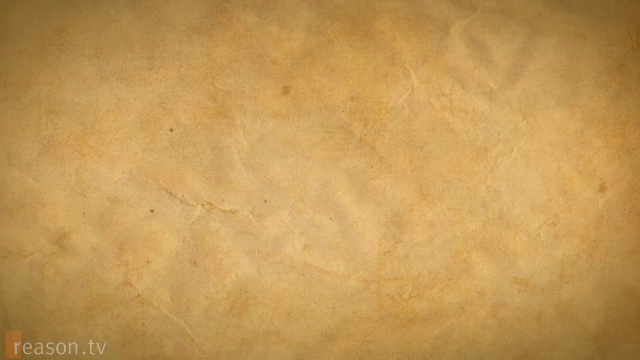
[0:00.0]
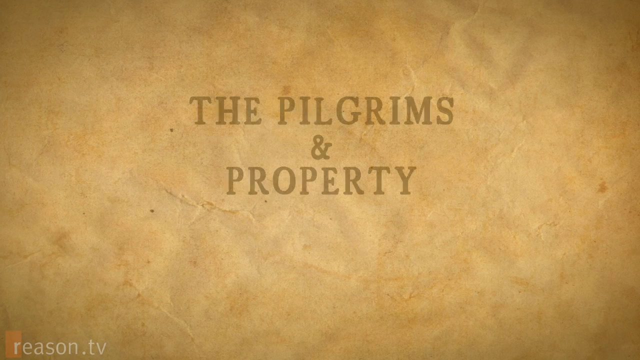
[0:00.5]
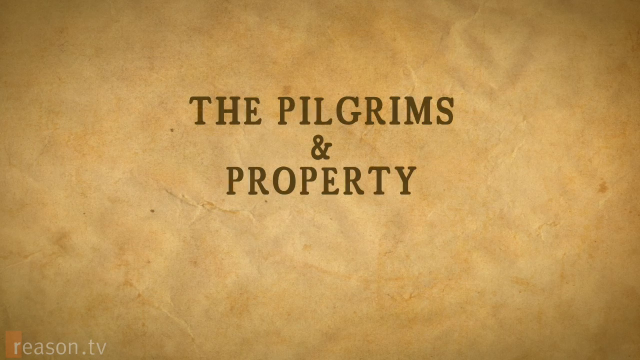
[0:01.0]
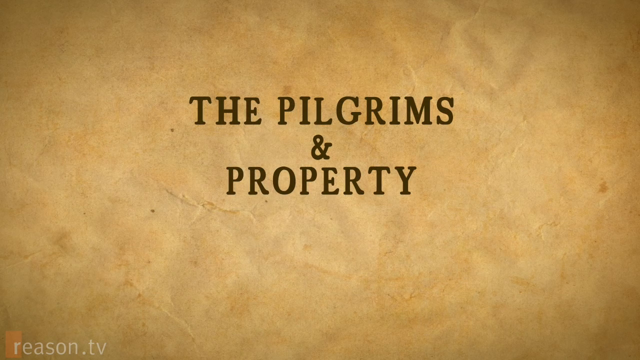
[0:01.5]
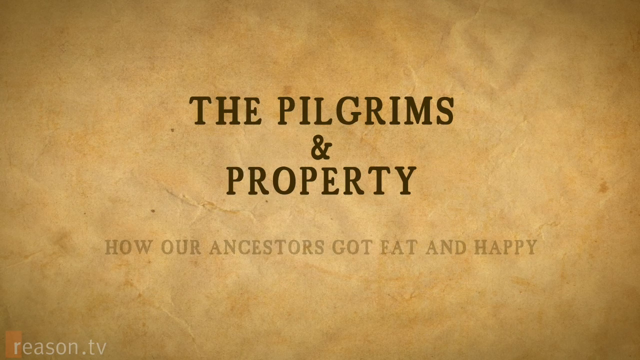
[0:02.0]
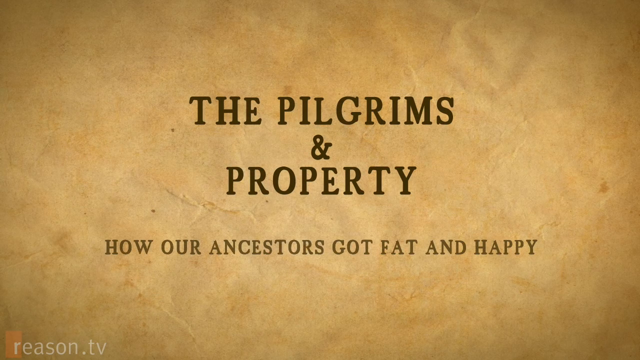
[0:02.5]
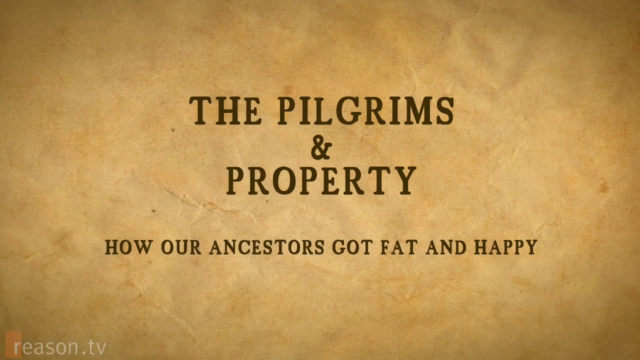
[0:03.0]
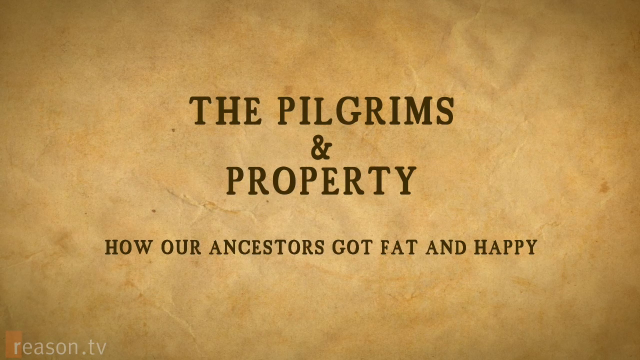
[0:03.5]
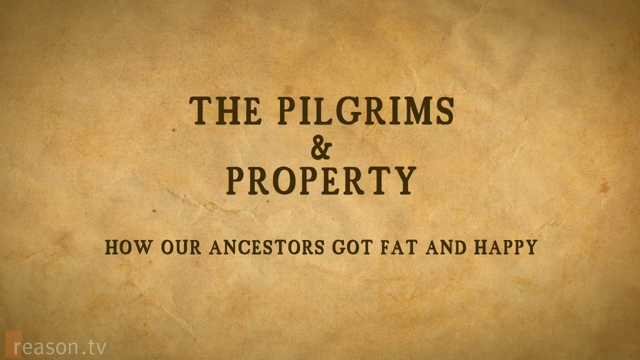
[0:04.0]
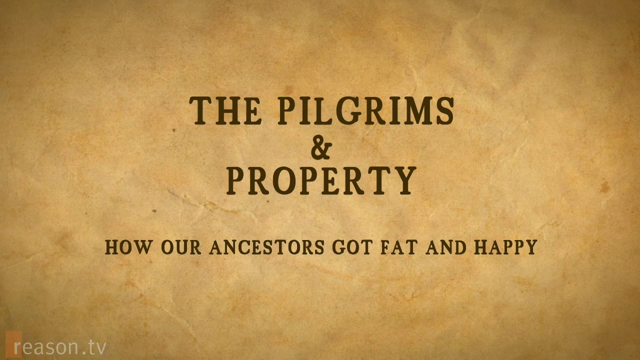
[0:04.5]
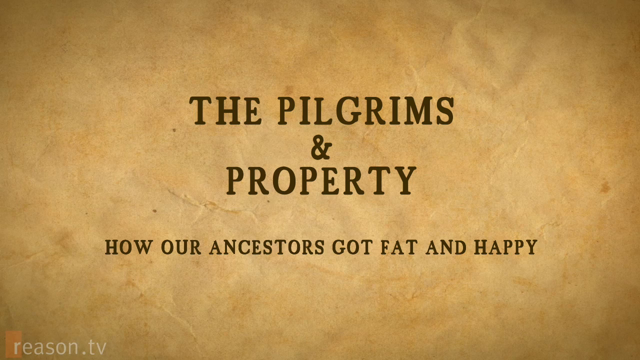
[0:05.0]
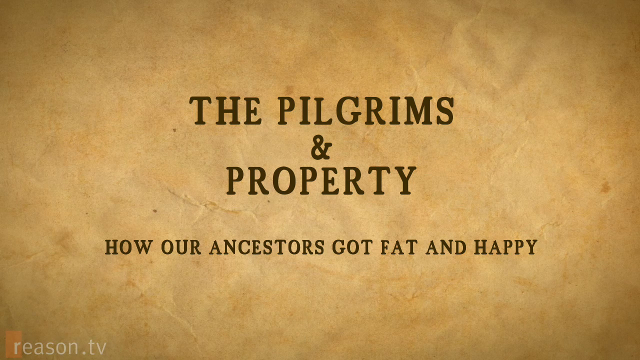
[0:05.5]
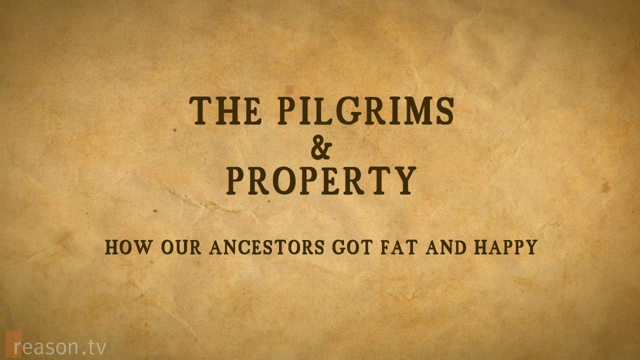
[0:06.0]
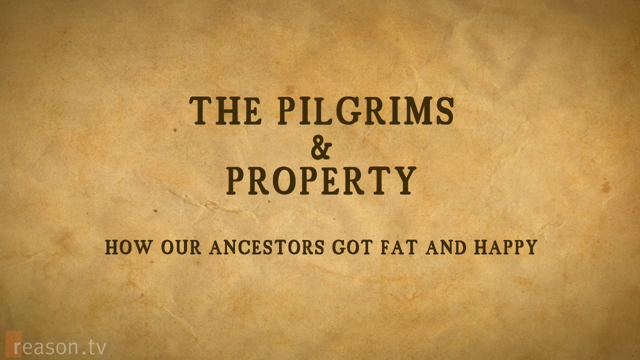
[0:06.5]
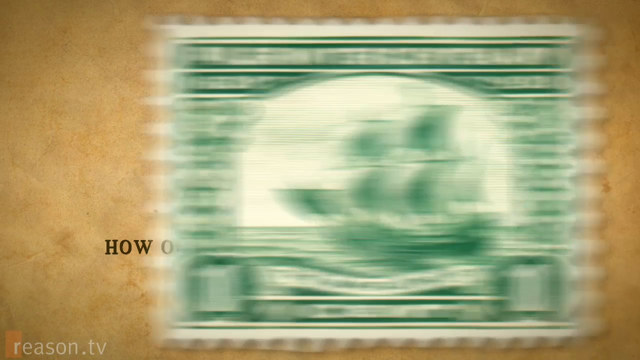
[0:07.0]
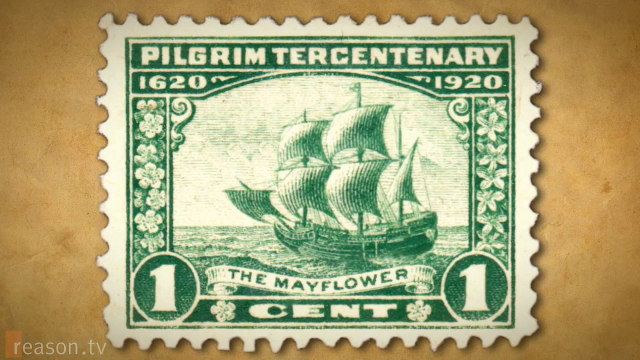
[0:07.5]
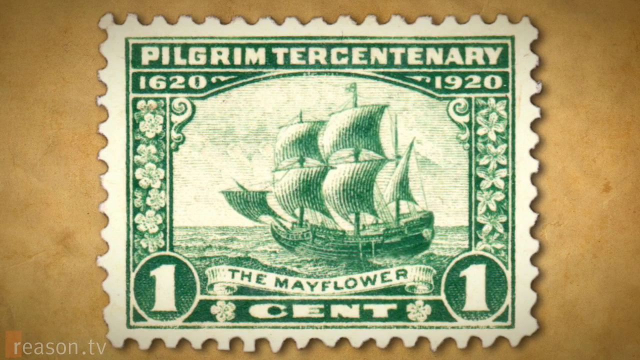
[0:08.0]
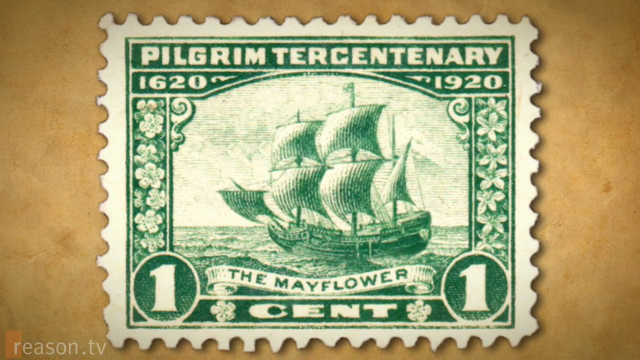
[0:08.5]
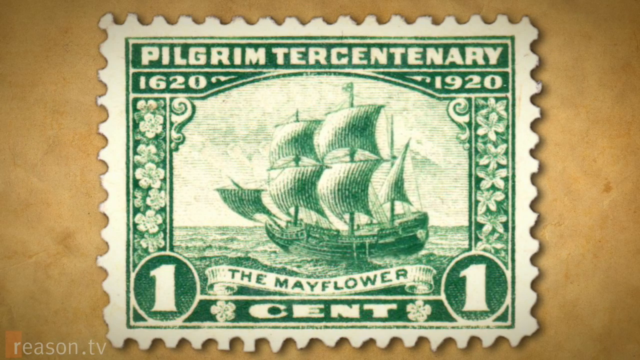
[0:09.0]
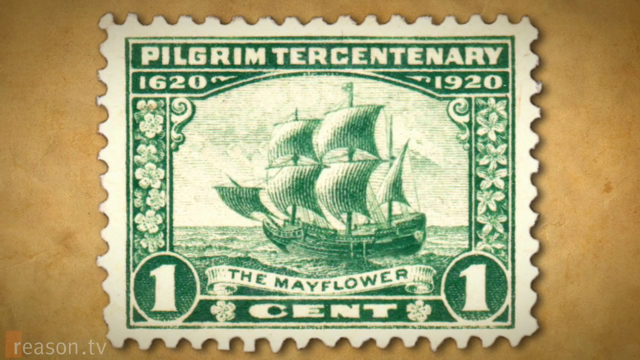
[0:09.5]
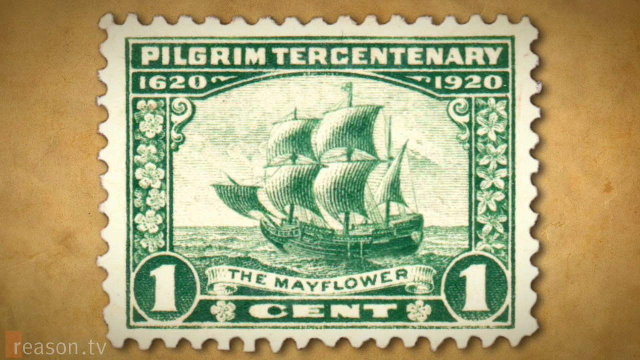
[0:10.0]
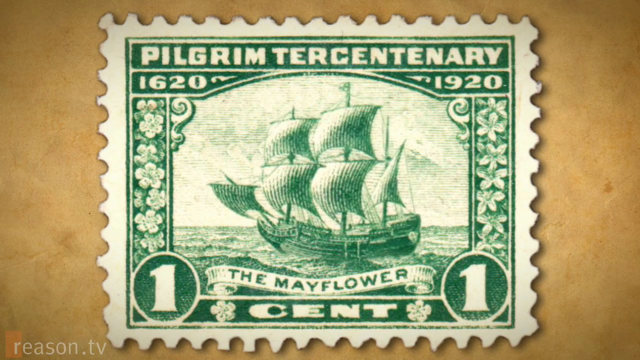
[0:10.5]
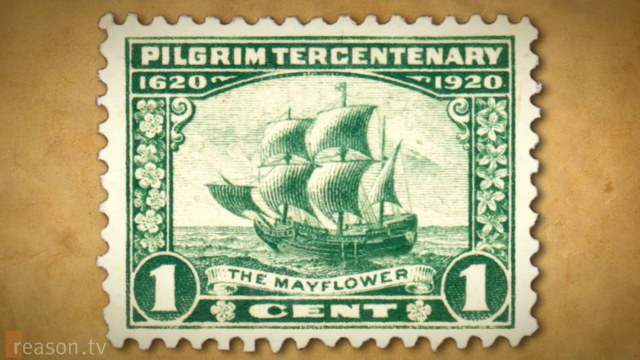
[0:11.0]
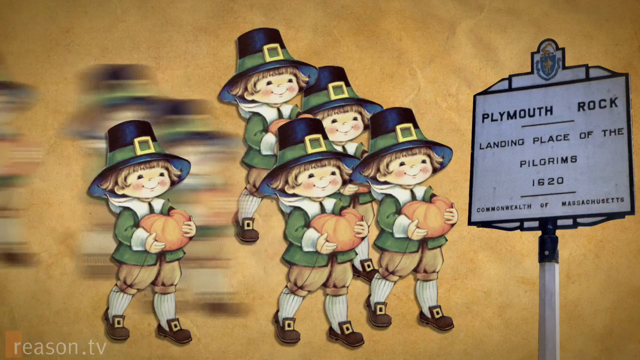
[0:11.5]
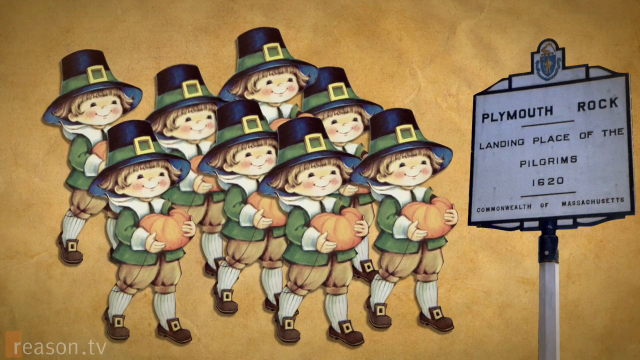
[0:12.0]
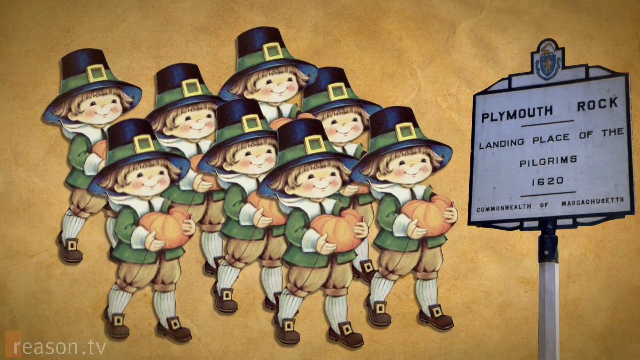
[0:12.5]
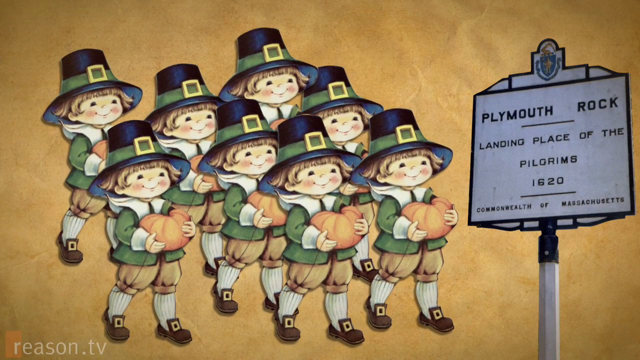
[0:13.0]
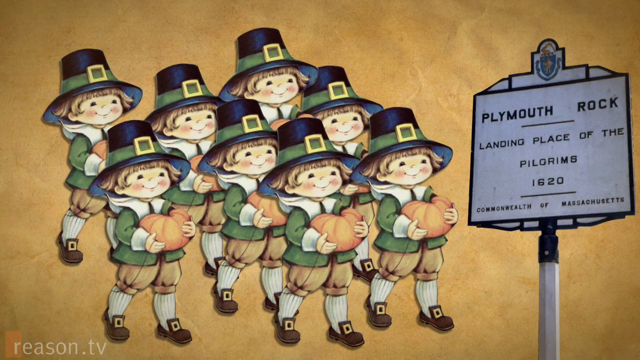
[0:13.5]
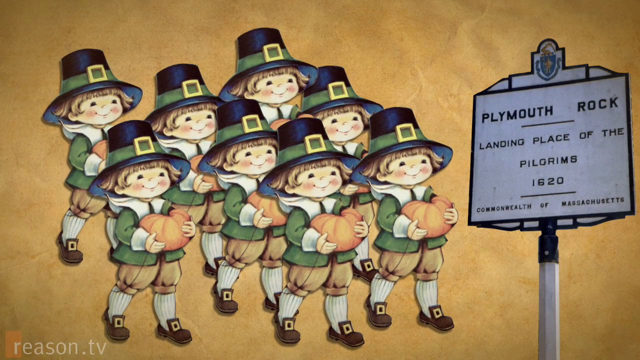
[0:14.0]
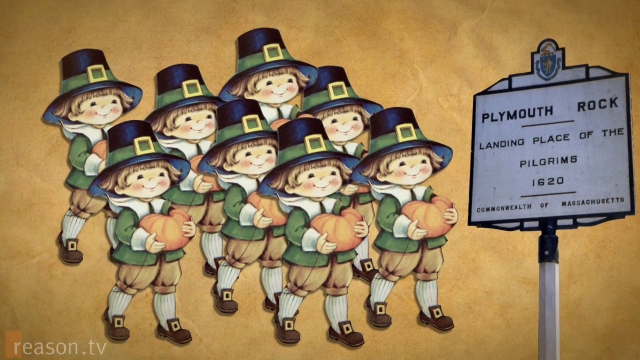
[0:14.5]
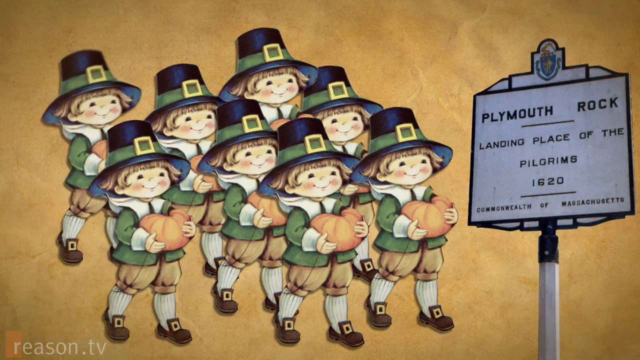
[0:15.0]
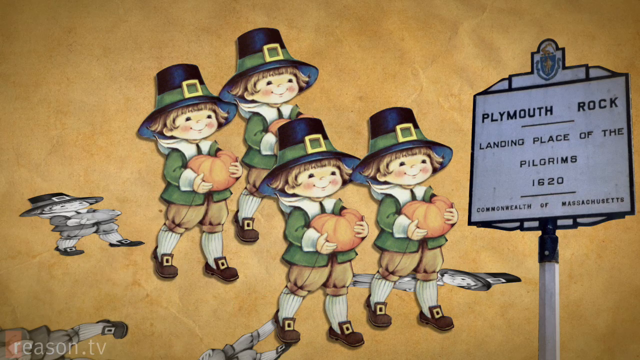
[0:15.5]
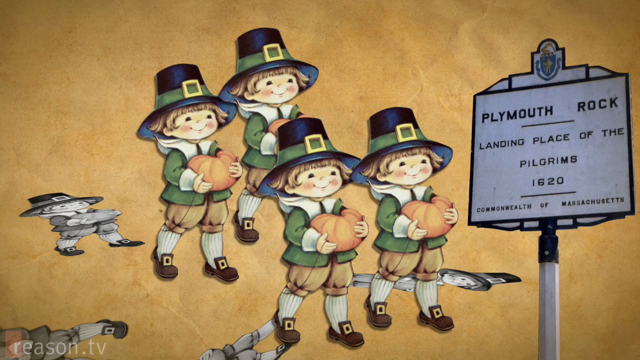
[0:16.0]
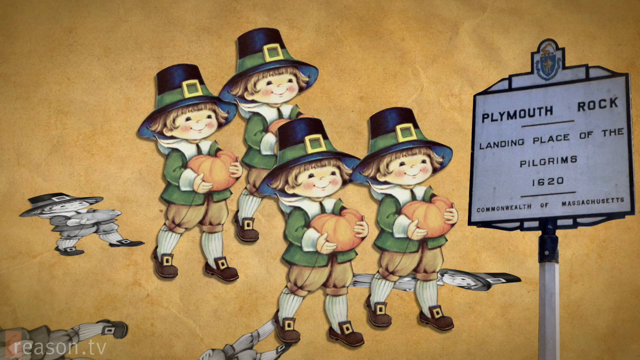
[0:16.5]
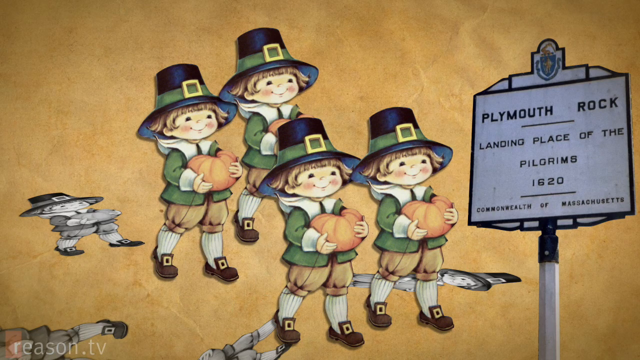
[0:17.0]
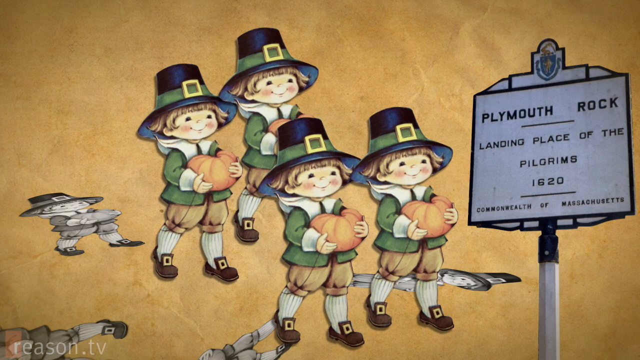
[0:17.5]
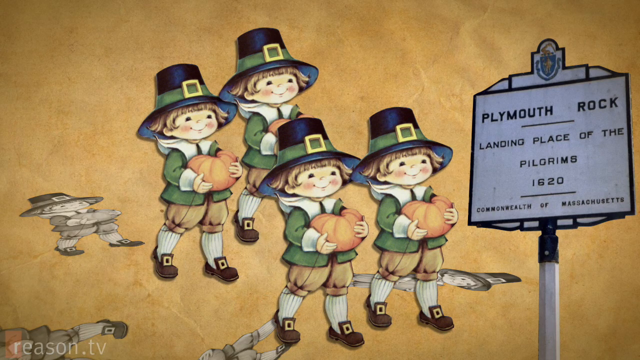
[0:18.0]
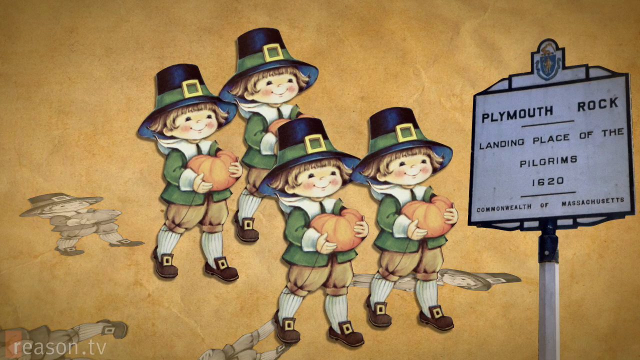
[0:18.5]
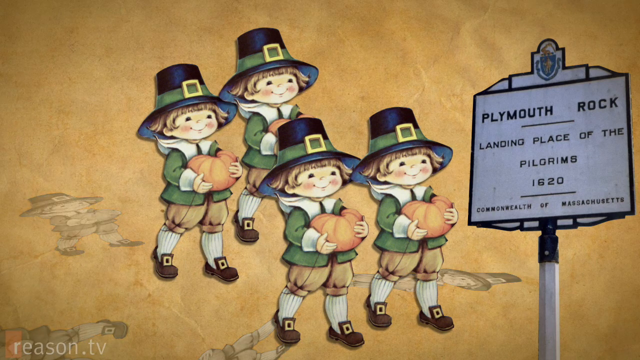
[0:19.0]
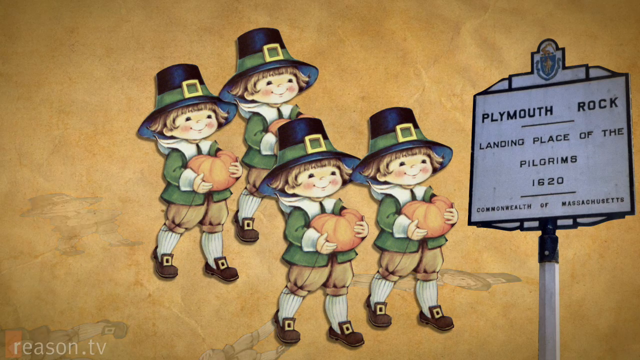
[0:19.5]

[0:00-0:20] The video opens on paper that looks old, like something used a long time ago, with goldish brown and beige hues all over it; it looks like it has been wrinkled up. Written on it in a gold color is "the pilgrims and property," and then text says "how our ancestors got fat and happy." The view switches to a green and white stamp that reads "pilgrim tercentary 1620 1920," shows one cent and says "the Mayflower"; the ship looks like it is moving within the stamp. Next come digital images of little kid pilgrims, the same image used nine times, each dressed like a little pilgrim and holding a pumpkin. A sign reads "Plymouth Rock landing place of the pilgrim 1620," and the pilgrim kids kind of bop up and down. All of them go away except four, and two of those almost stop looking 3D, flattening out and turning gray, leaving just the four little pumpkin kids.